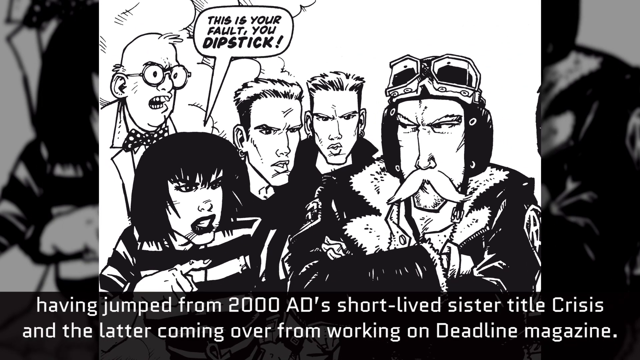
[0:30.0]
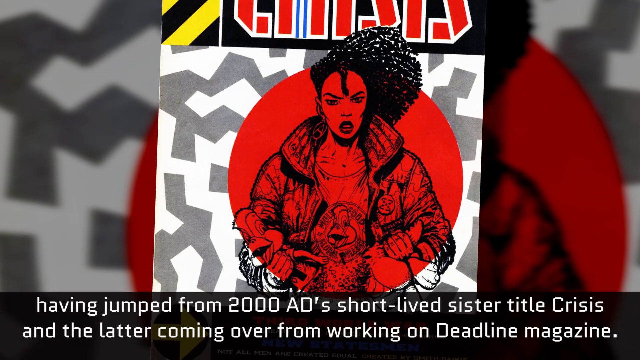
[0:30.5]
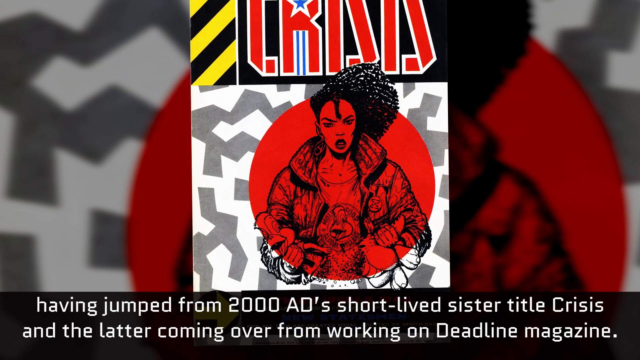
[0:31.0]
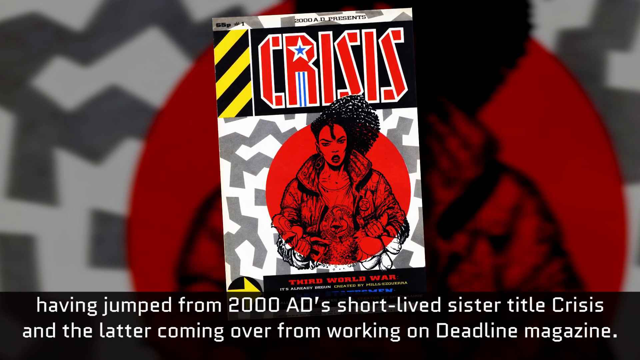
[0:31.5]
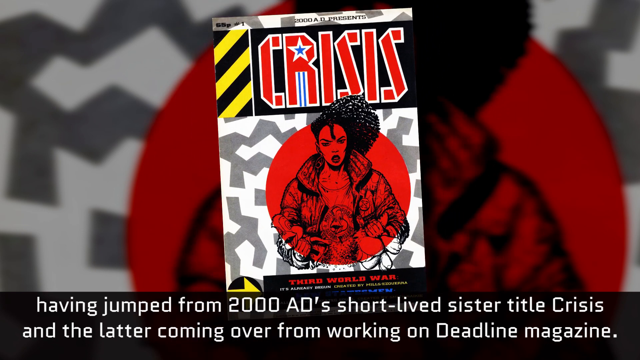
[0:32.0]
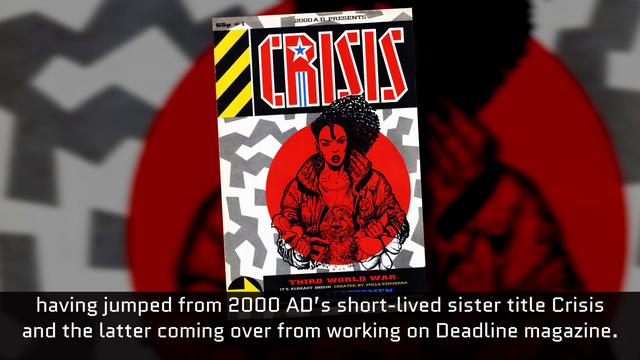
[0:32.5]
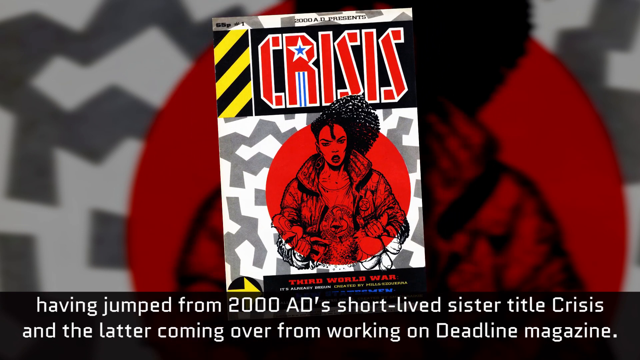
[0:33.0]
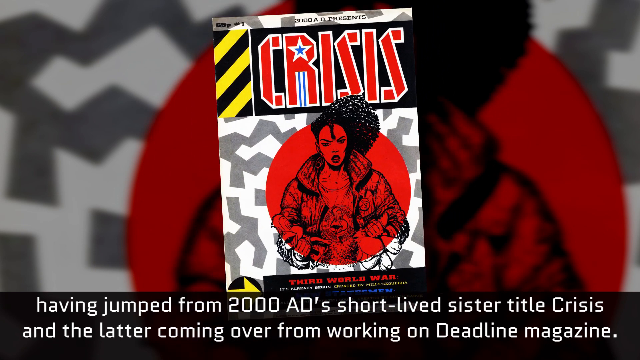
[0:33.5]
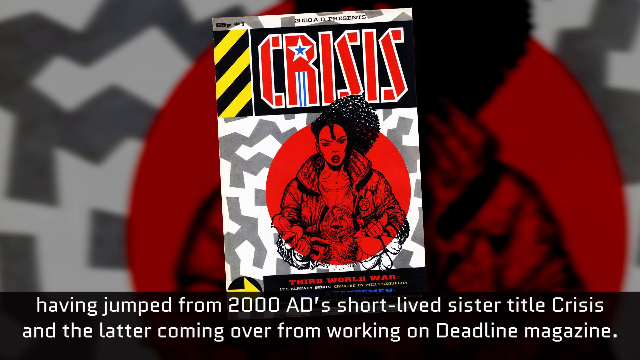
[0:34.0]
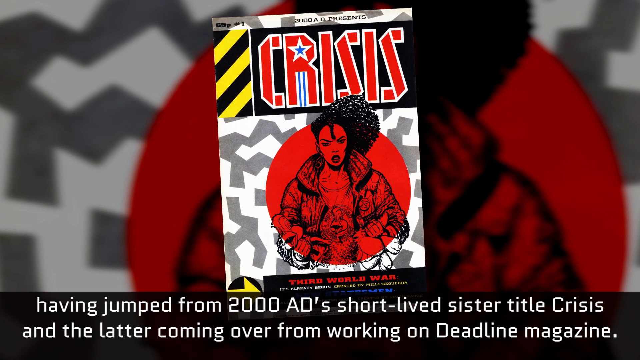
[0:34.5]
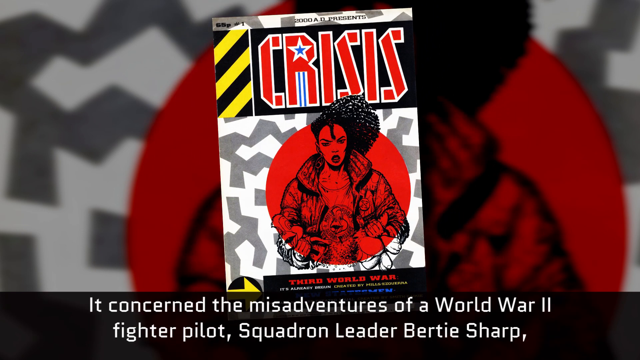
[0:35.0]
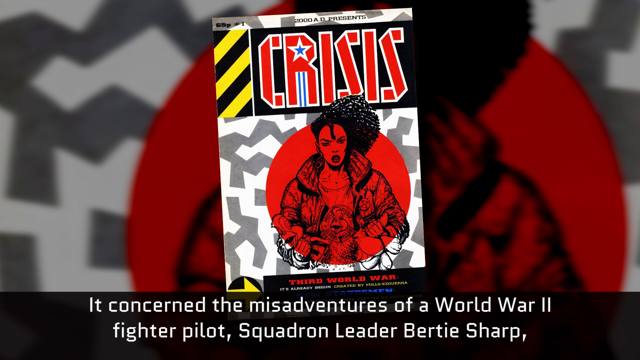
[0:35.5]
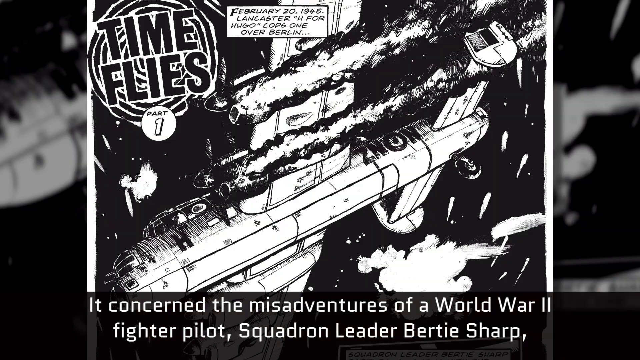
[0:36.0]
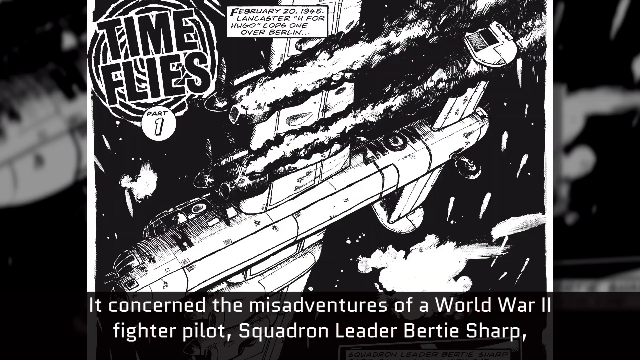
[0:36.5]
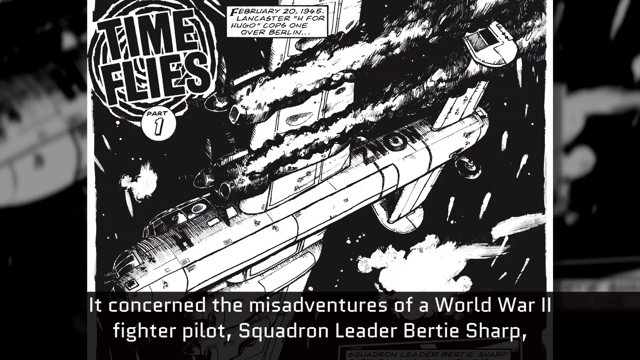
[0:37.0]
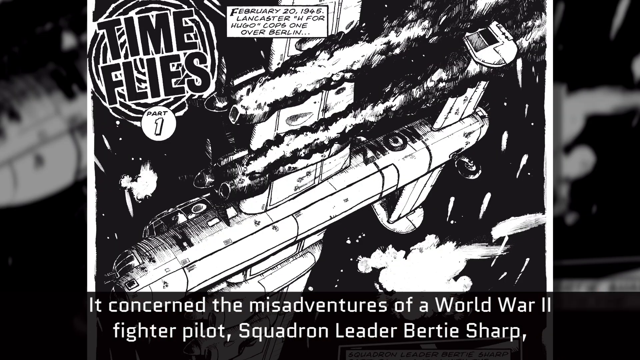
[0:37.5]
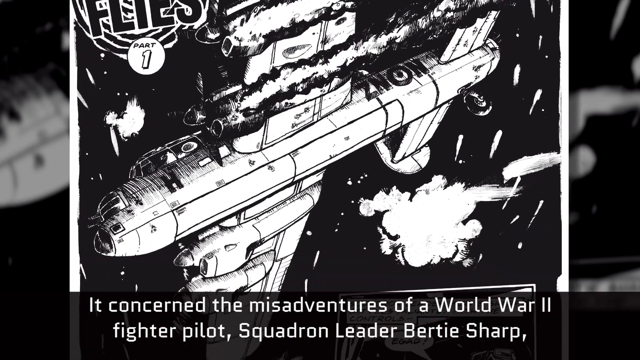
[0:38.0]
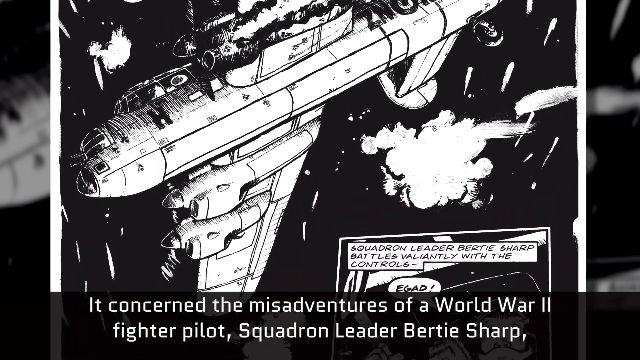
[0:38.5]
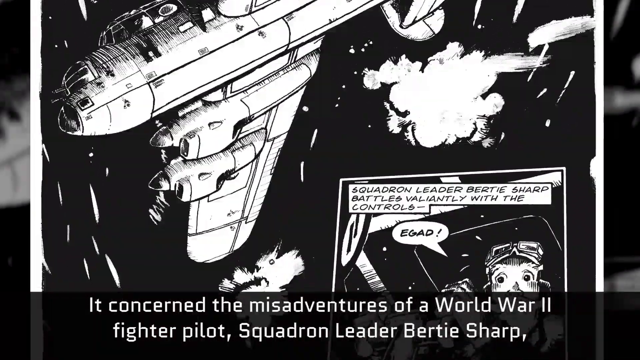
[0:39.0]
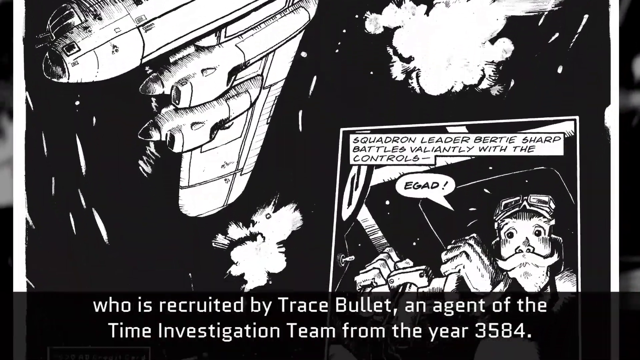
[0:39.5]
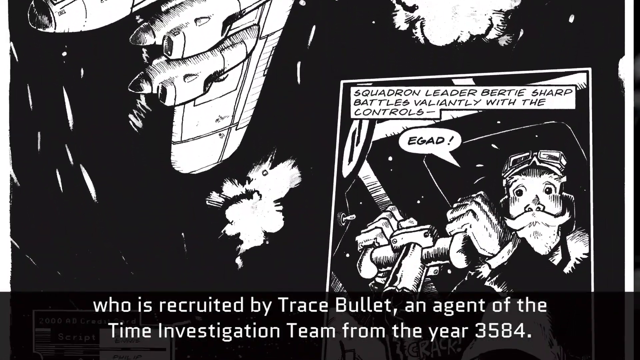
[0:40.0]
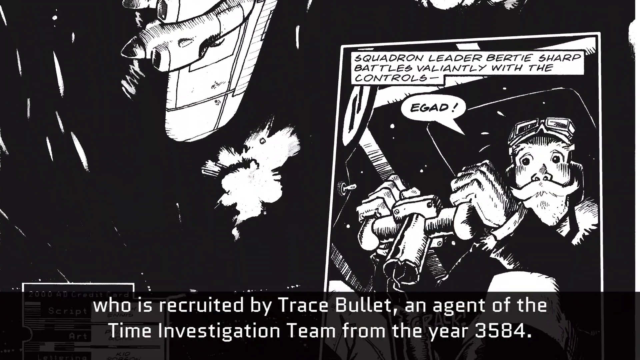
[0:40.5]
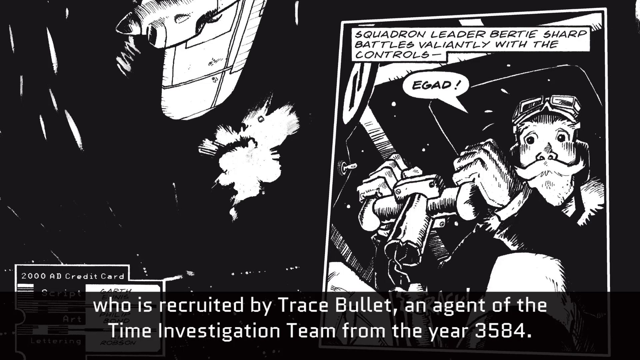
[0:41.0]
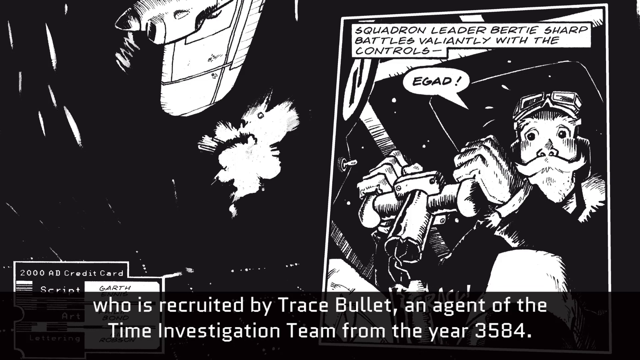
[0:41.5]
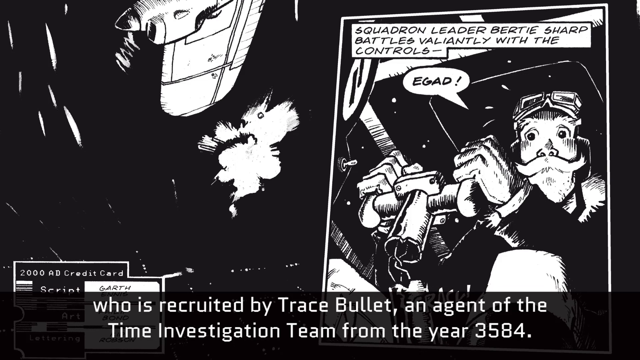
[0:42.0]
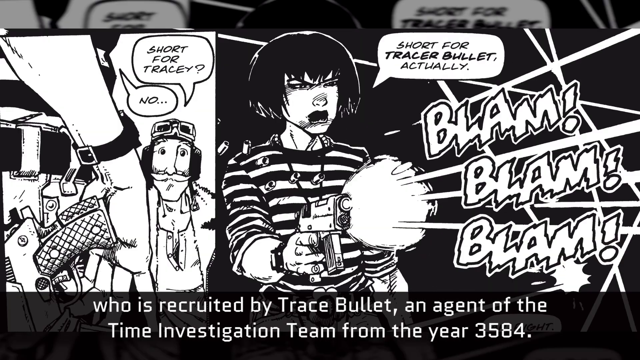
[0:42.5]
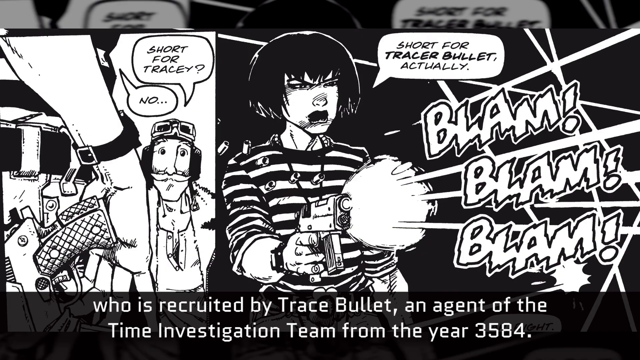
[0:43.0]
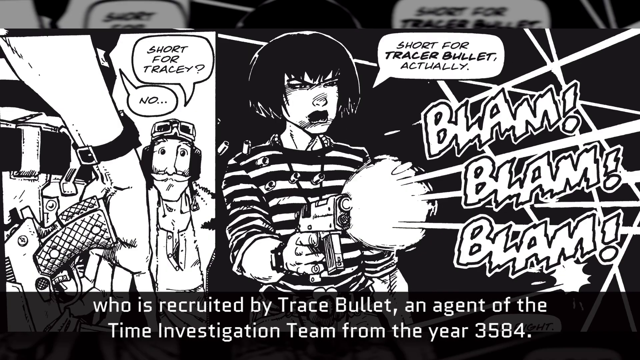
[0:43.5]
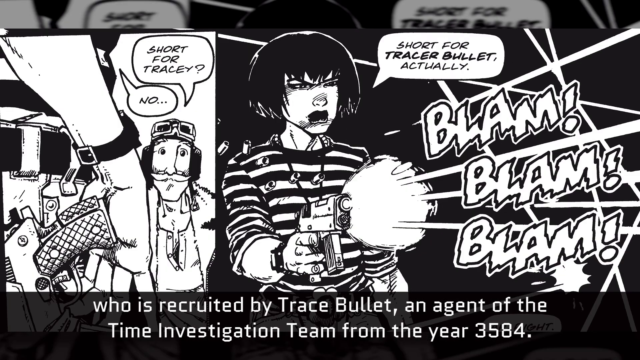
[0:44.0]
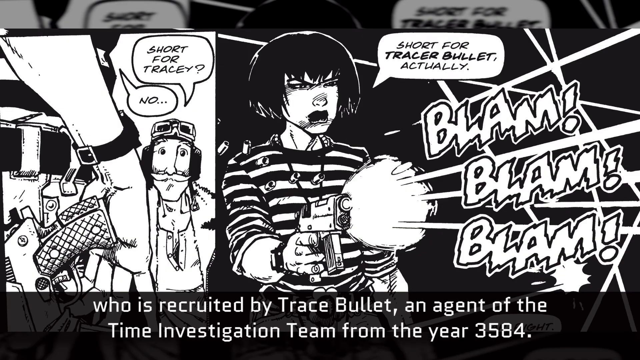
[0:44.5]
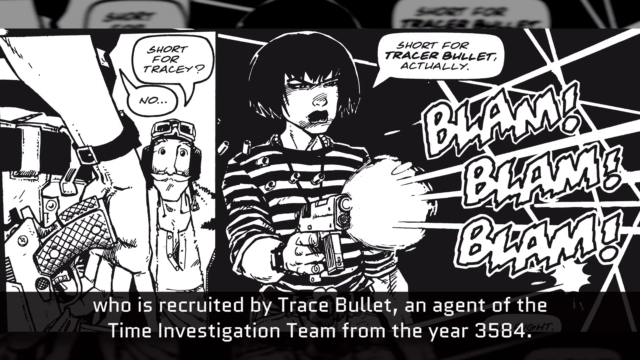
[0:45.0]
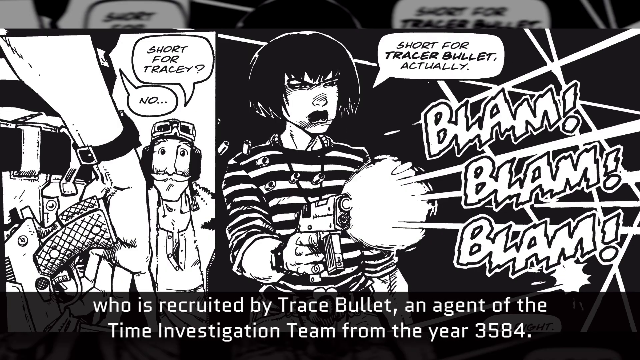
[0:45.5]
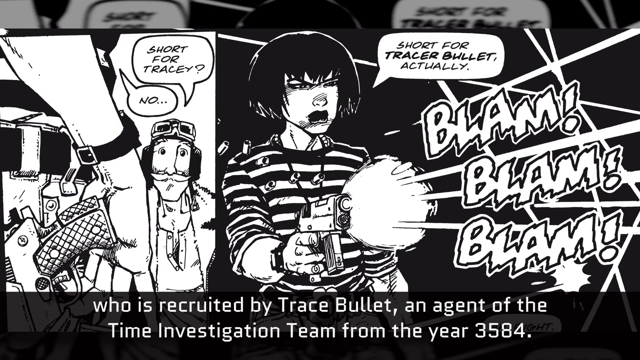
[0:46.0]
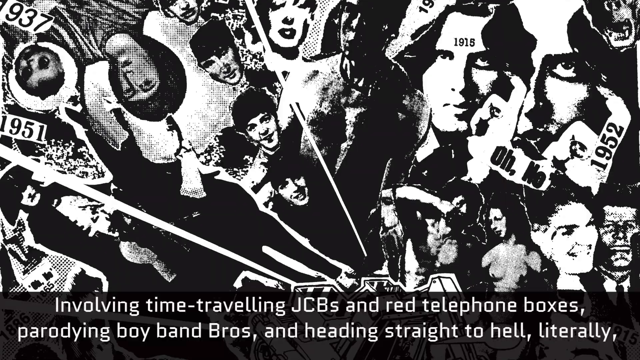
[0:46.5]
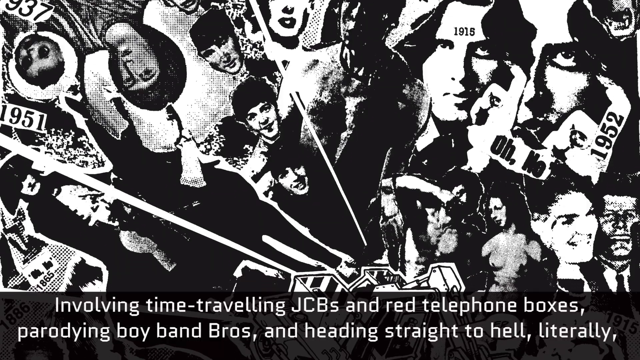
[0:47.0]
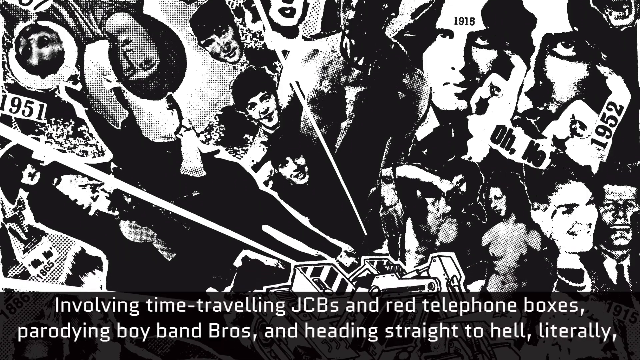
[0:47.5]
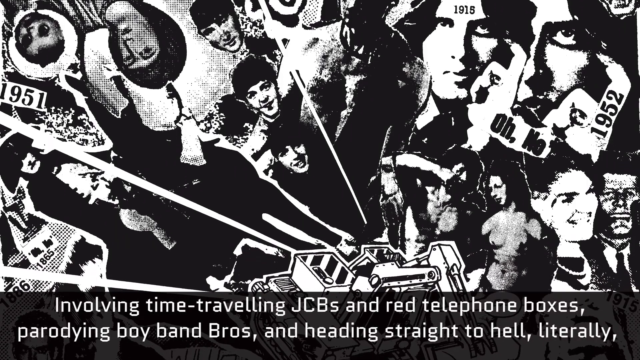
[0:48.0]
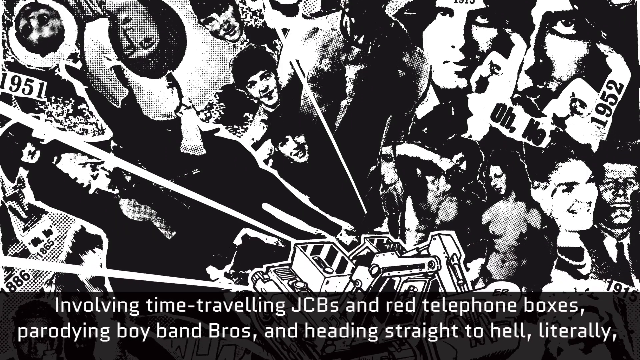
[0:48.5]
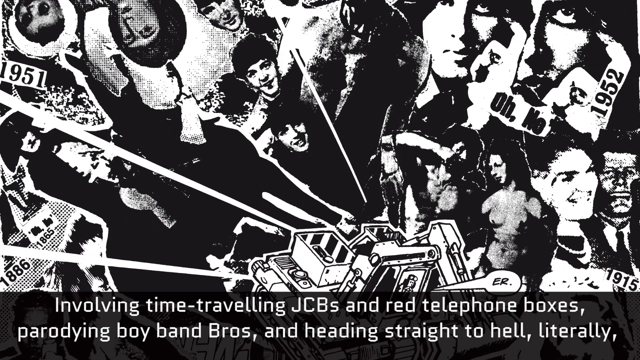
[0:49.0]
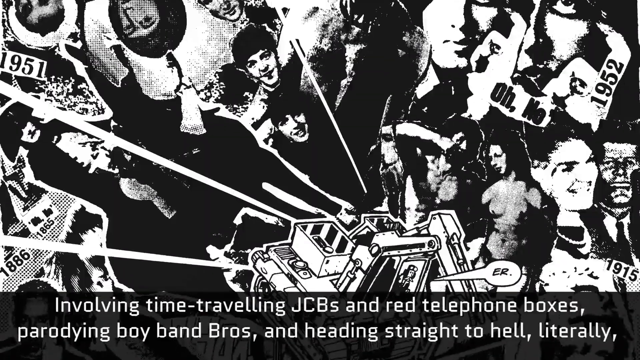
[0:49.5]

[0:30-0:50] A comic called Crisis is in the middle of the screen, with a picture of a woman on its front. Text at the bottom refers to a short-lived sister title, Crisis, and reads "the latter coming over from working on Deadline magazine." The text then says "it concerned the misadventures of World War II fighter pilot squadron leader Birdie Sharp." The video cuts to the inside of the comic, showing "Time Flies Part 1", then a caption reading "February 20, 1945", and a submarine. A close-up shows a pilot in an aeroplane with the caption "squadron leader Bertie Shaw battles valiantly with the controls." The text at the bottom says "he was recruited by Tracy Bullard, an agent of the time investigation team from the year 3584." The video cuts to another part of the comic and then to black and white cutouts of famous celebrities, including The Beatles and Van Morrison. The text at the bottom says "involving time-travelling JCBs and red telephone boxes, parodying boy band Bross and heading straight to hell literally."